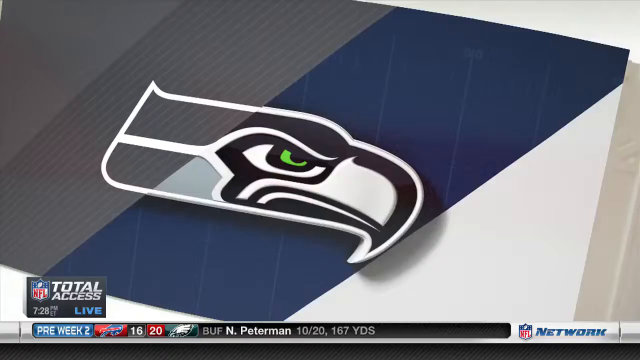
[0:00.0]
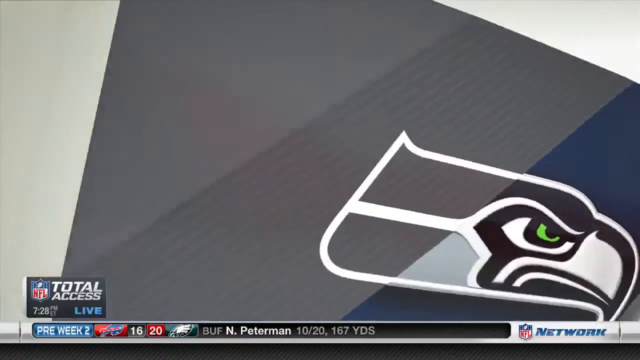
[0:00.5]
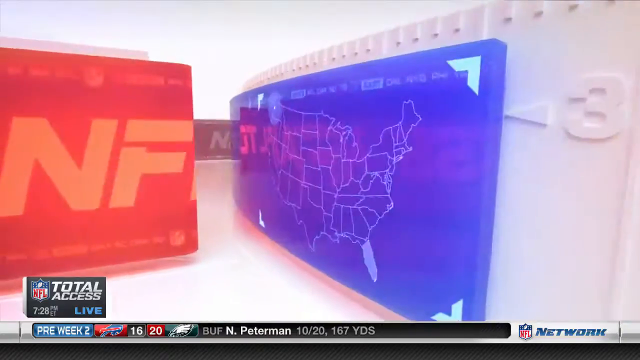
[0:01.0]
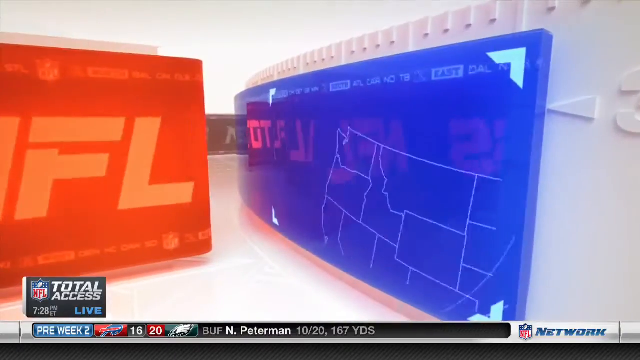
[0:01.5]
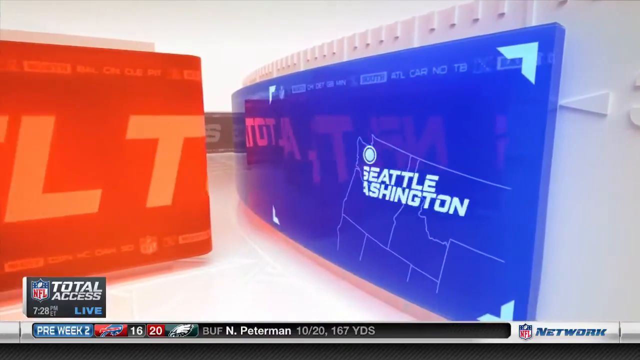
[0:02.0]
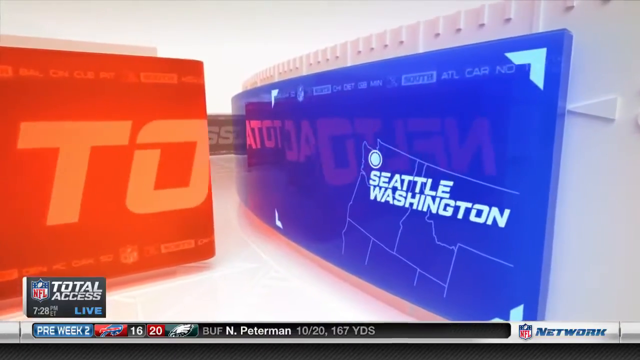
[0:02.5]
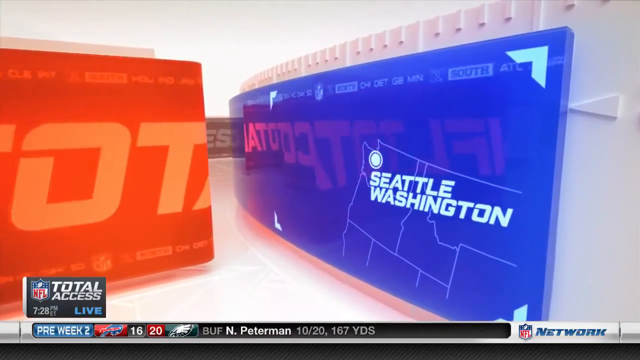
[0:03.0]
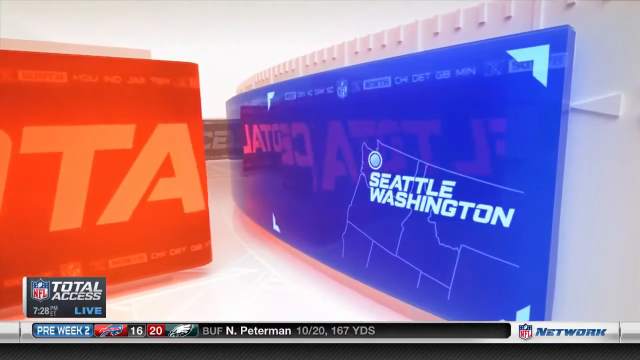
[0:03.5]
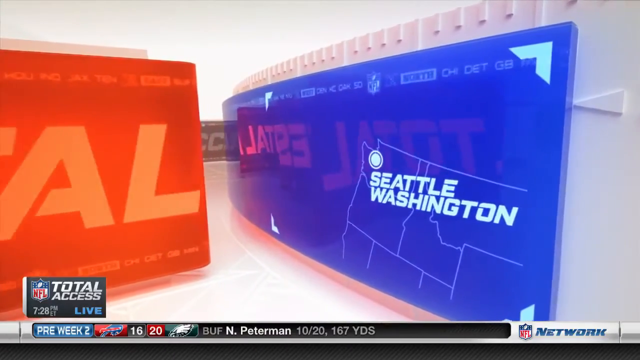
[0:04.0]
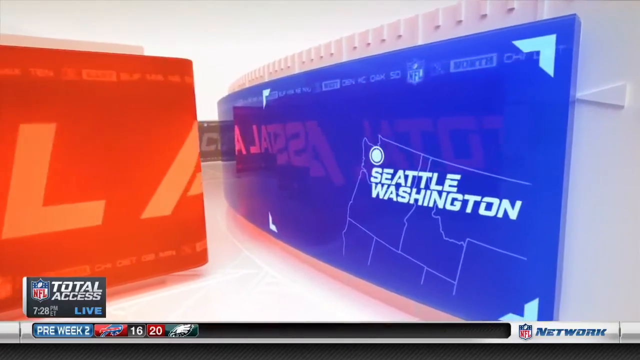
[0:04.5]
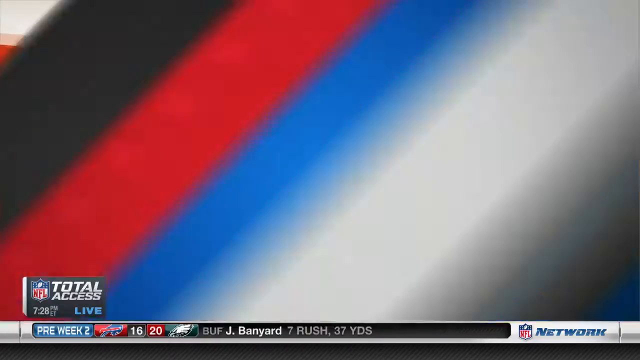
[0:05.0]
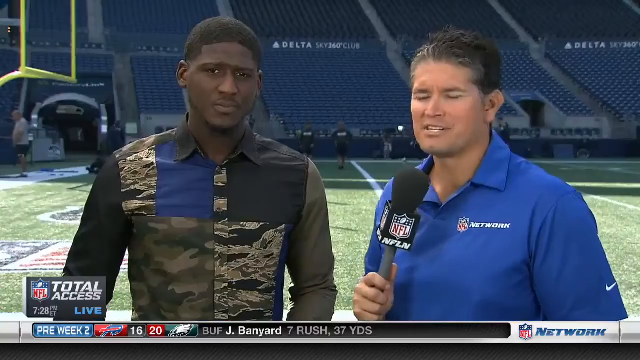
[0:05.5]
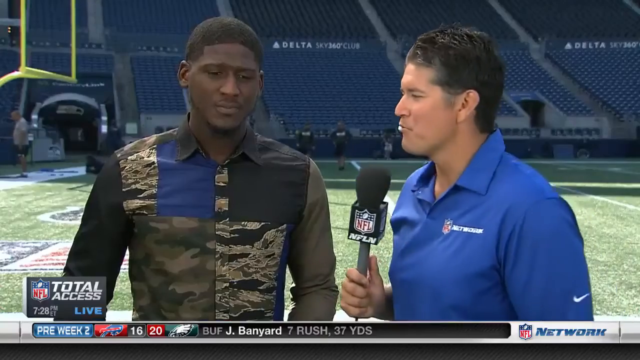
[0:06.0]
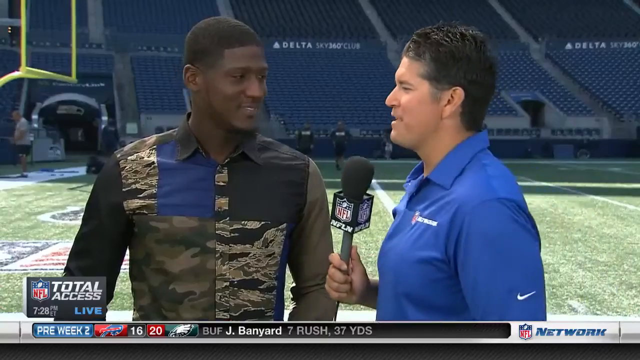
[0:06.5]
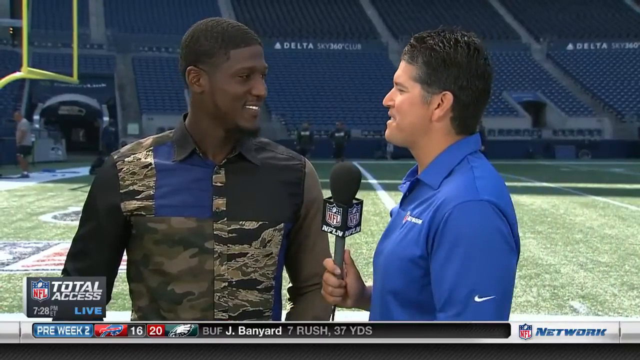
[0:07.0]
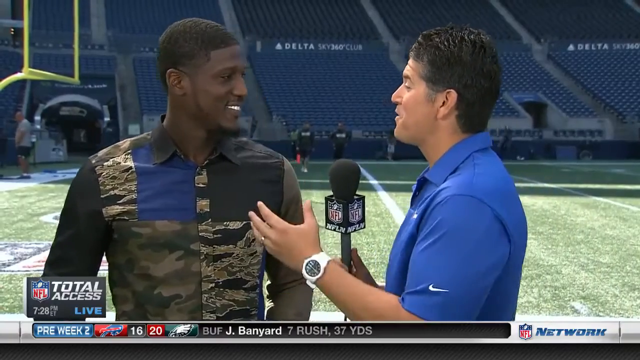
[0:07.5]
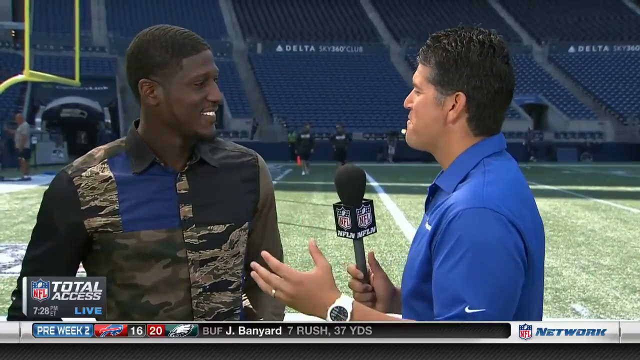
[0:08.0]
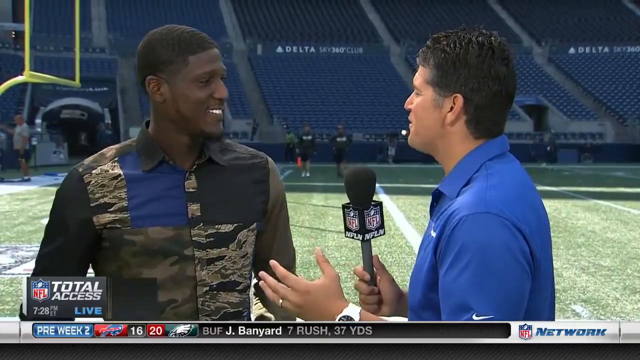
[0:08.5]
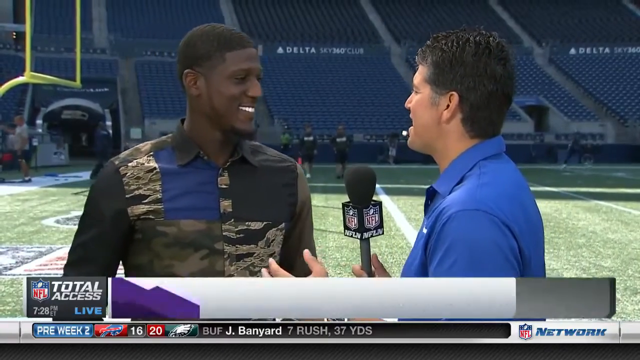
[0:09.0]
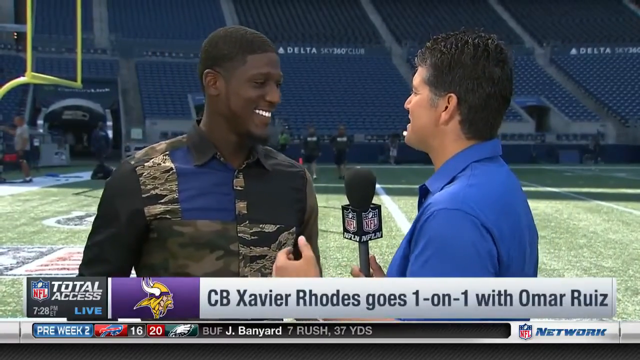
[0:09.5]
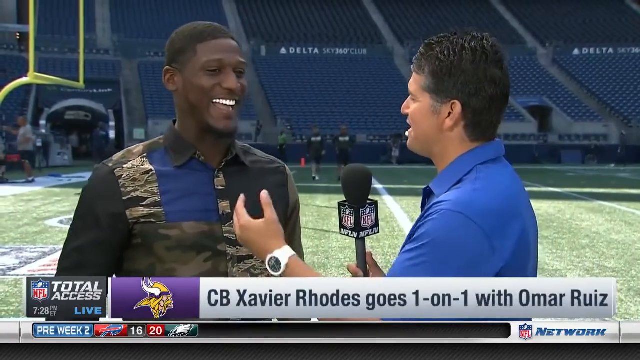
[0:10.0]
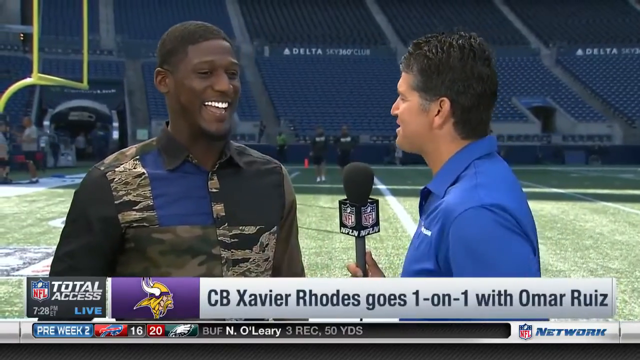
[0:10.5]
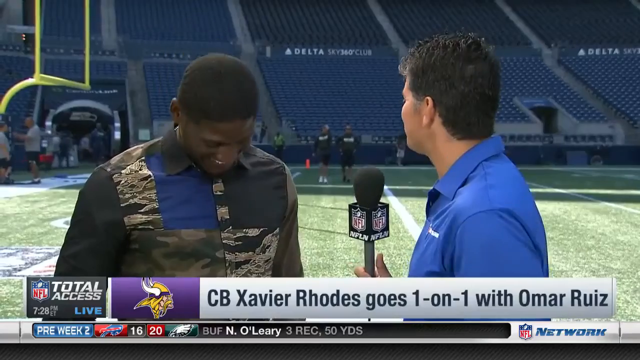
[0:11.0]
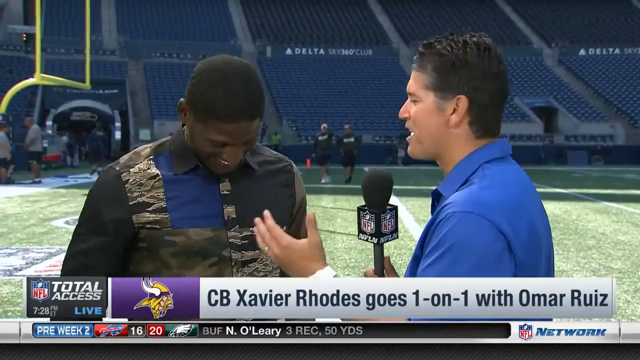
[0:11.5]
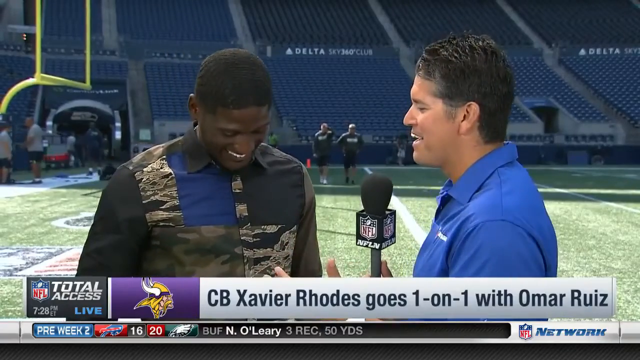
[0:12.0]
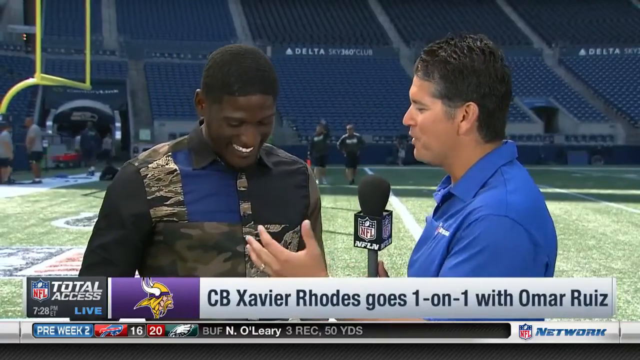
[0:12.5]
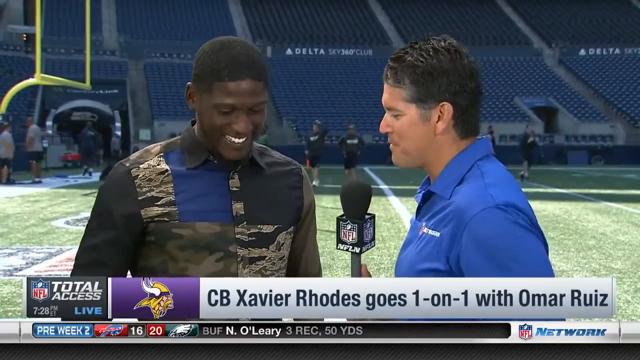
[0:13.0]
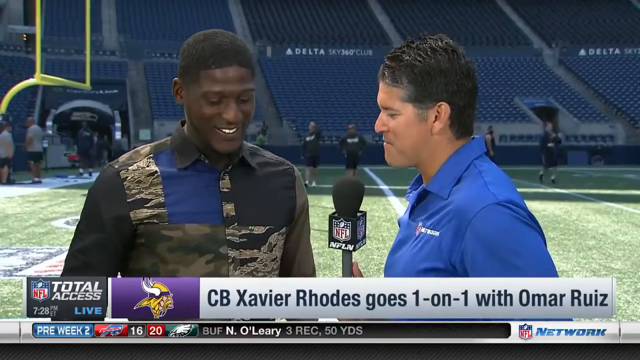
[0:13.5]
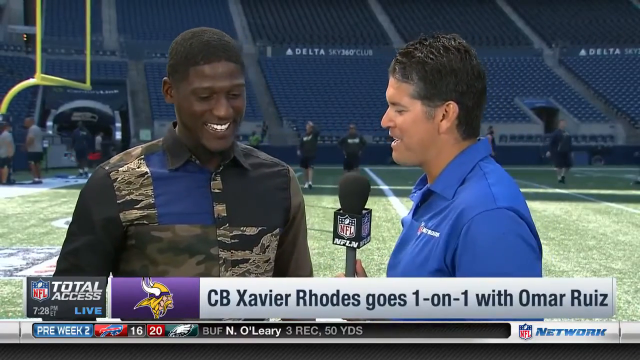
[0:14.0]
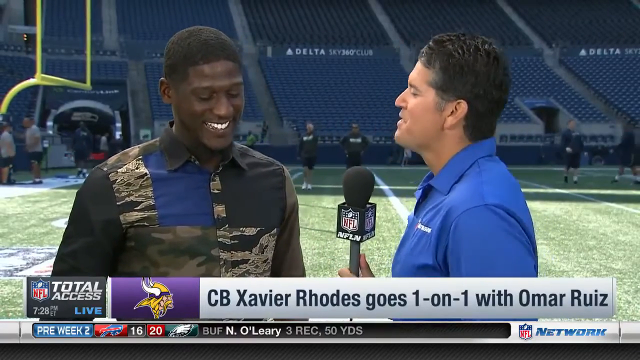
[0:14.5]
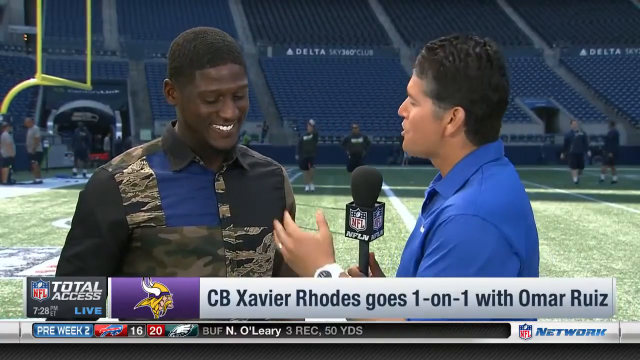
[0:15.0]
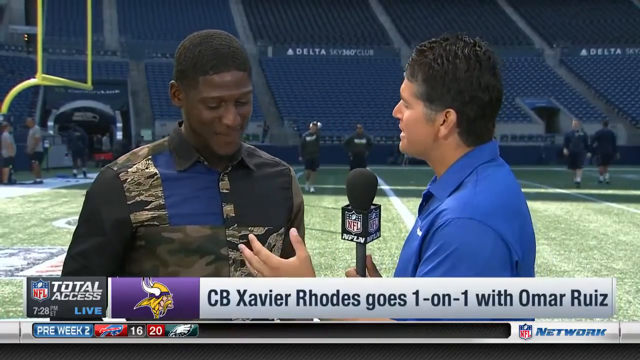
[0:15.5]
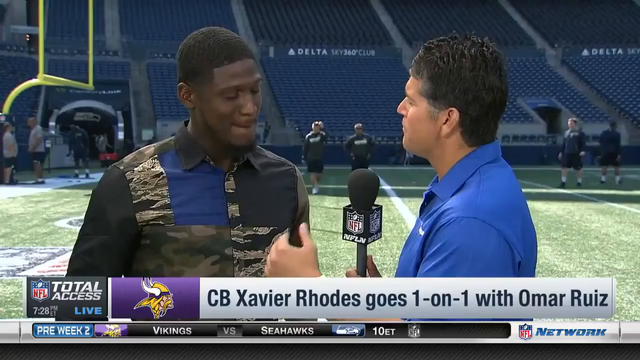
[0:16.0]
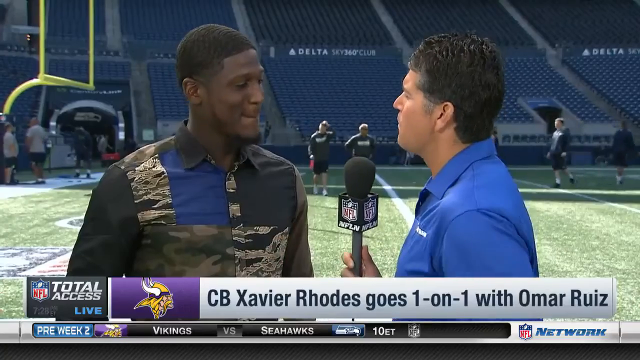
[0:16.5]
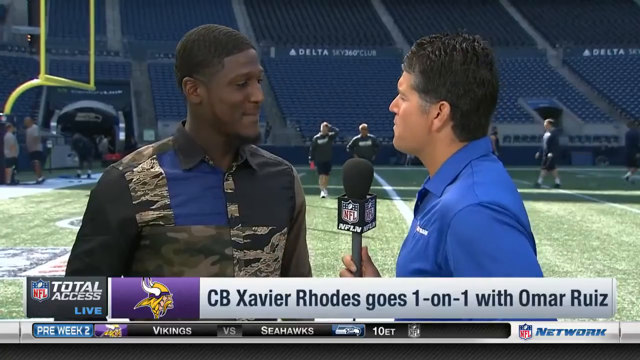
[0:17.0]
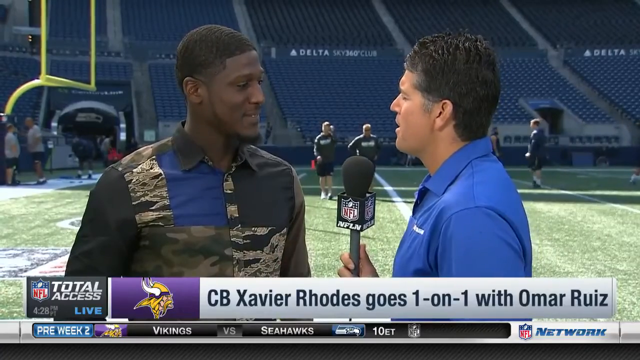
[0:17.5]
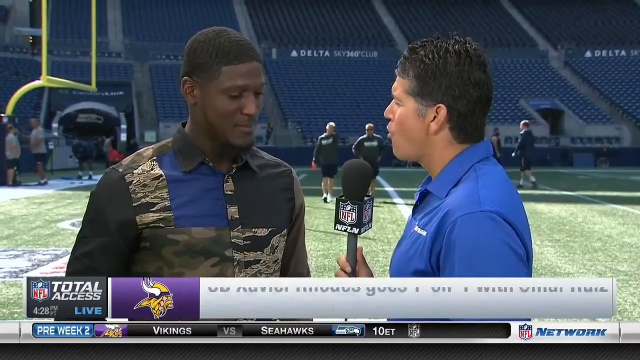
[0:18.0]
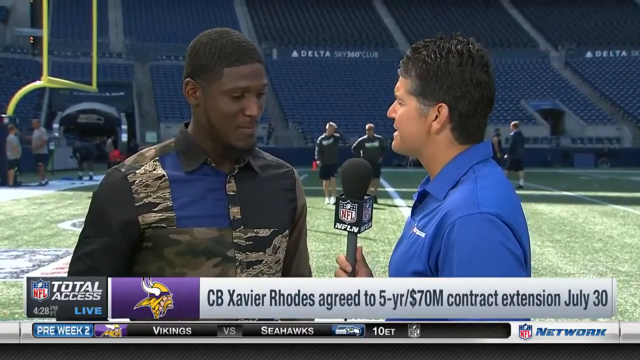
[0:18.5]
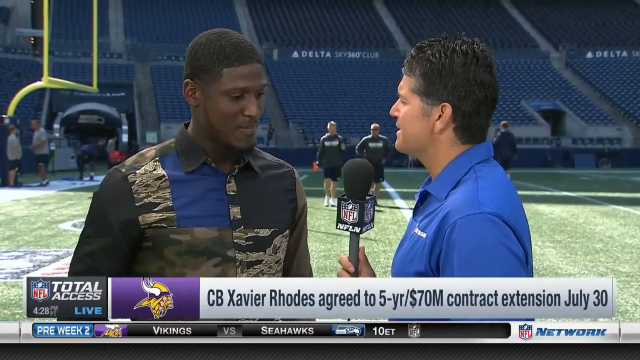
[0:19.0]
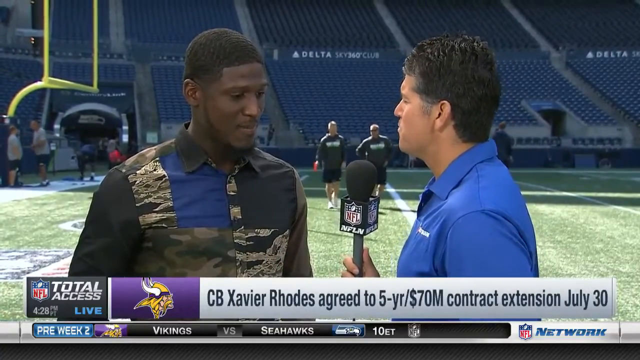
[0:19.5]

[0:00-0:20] A small graphic in the bottom left-hand corner of the screen shows the NFL logo with the time, 7 28 p.m., underneath. The text "total access" appears in white, and in the bottom right-hand corner of that text box is the word "live" in blue letters. An eagle-like image appears, followed by opening titles that look like red and blue boxes. The screen then changes to two men standing on what looks like a rugby or American football field. One wears a blue network polo shirt and holds a microphone in his right hand, his body turned towards the other man, who faces the camera. The second man, a Black man, wears a patchwork-type shirt of different military camouflage patterns and is being interviewed by the man in the blue shirt. The man in the blue shirt turns his entire body to face him, then keeps his body perfectly still and turns his head to face him. The man with the microphone holds his left hand up as he talks, while the other man laughs, hanging his head down and looking towards the floor. In the background some players walk about, and subtitles at the bottom show news headlines.